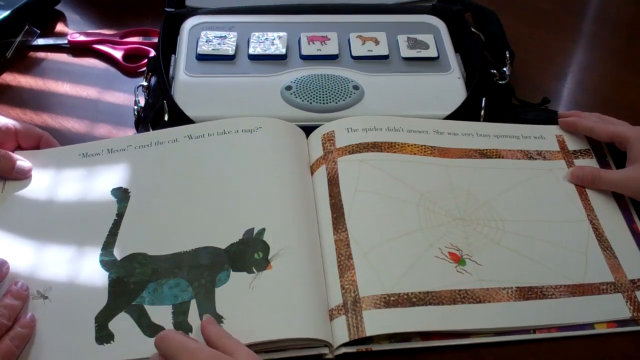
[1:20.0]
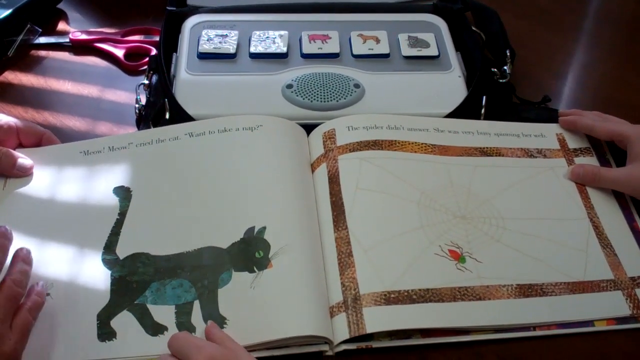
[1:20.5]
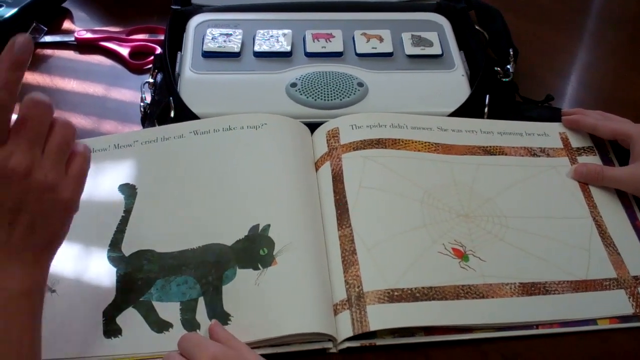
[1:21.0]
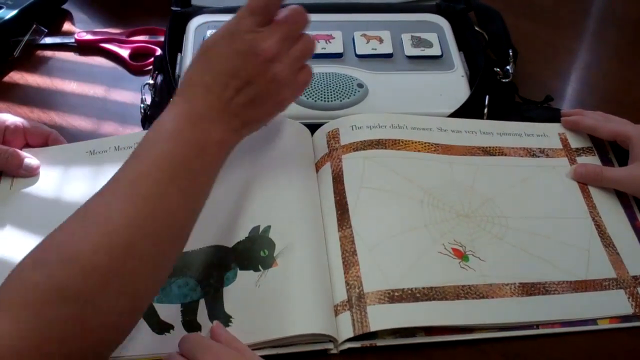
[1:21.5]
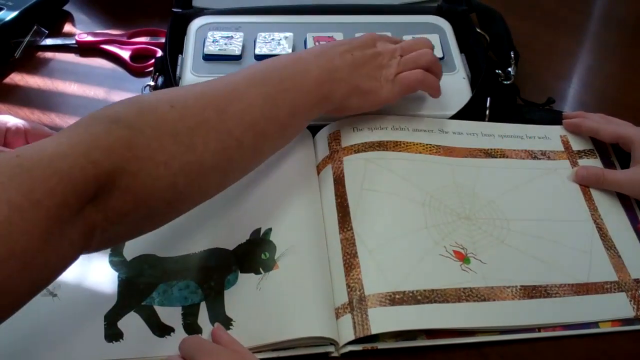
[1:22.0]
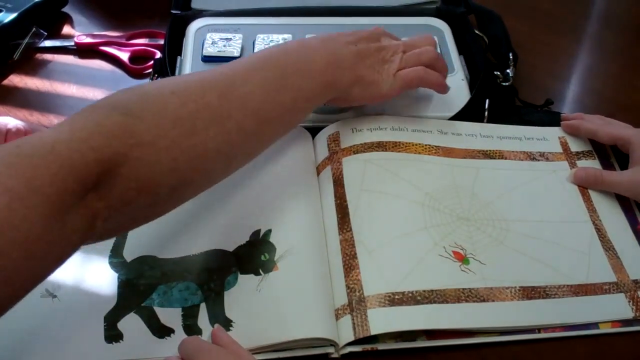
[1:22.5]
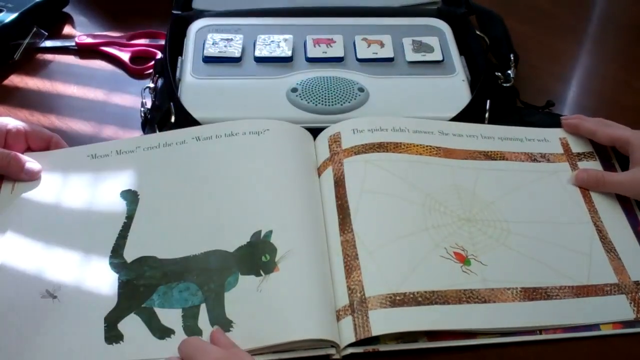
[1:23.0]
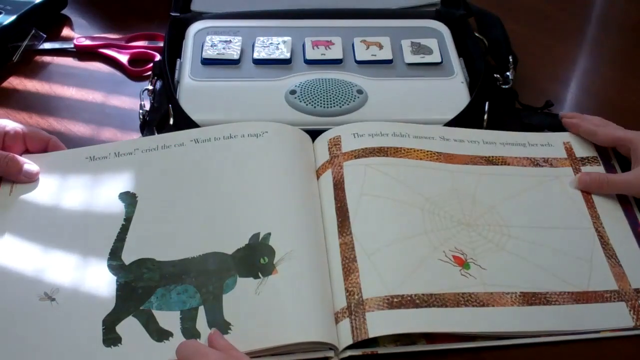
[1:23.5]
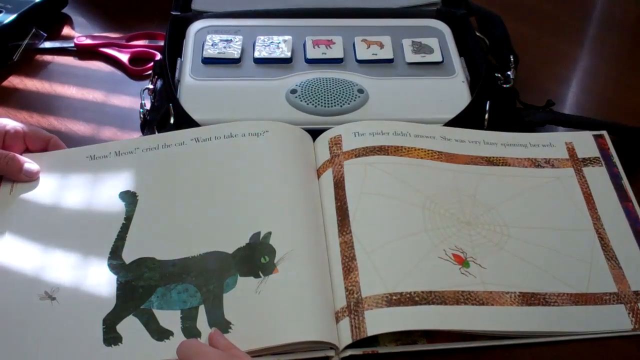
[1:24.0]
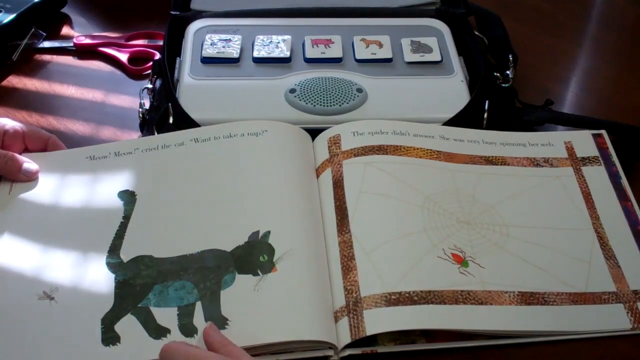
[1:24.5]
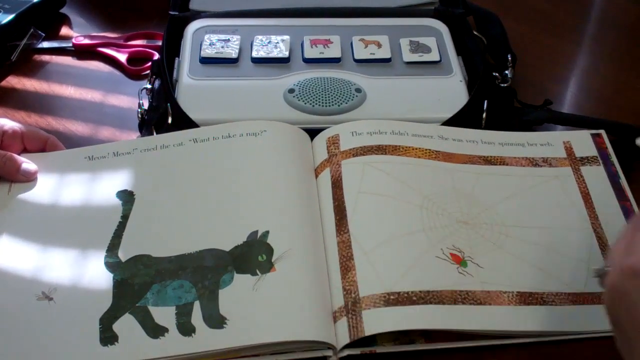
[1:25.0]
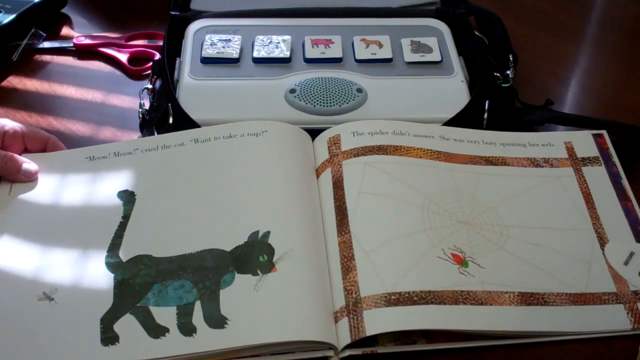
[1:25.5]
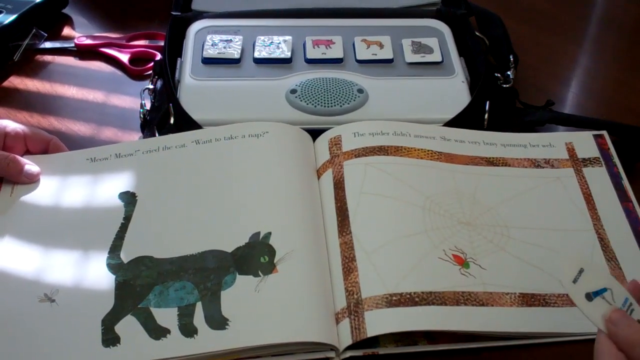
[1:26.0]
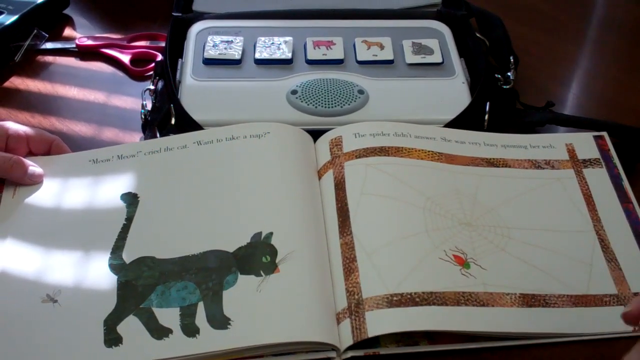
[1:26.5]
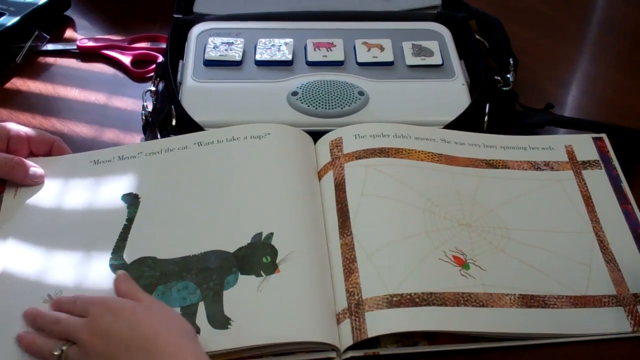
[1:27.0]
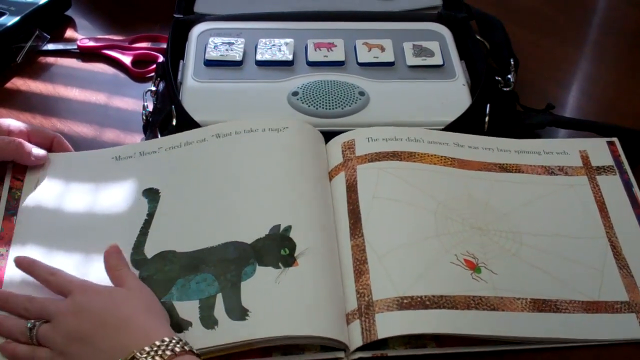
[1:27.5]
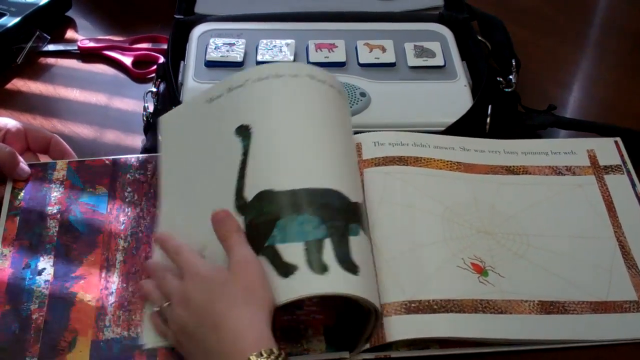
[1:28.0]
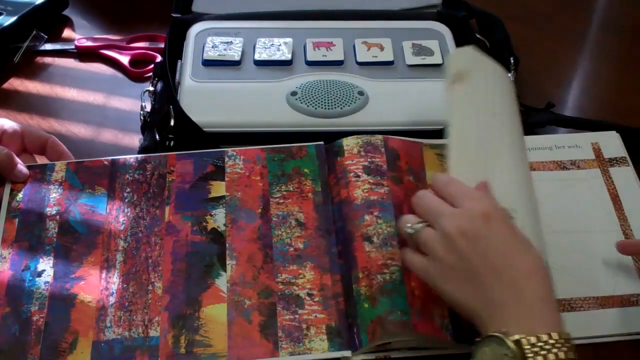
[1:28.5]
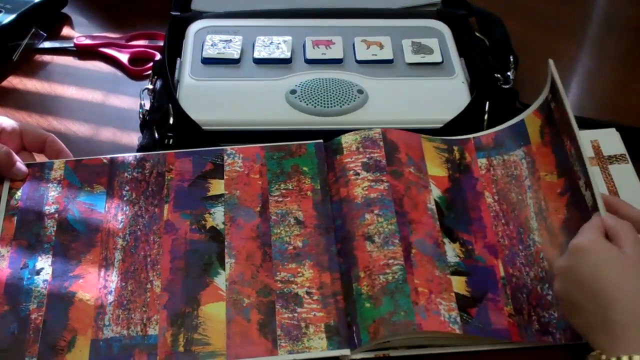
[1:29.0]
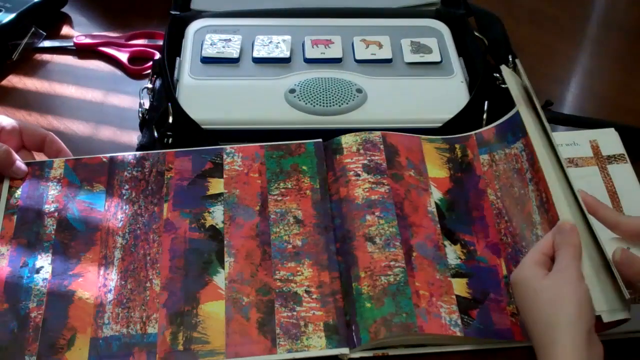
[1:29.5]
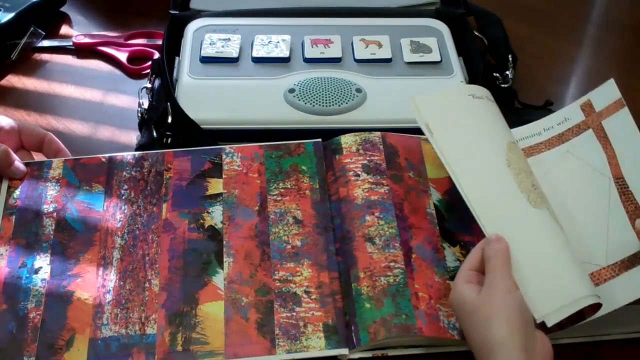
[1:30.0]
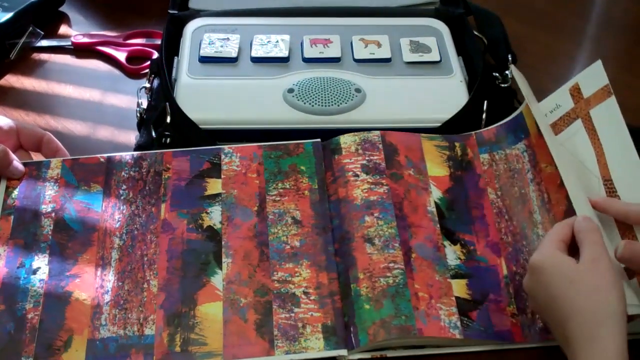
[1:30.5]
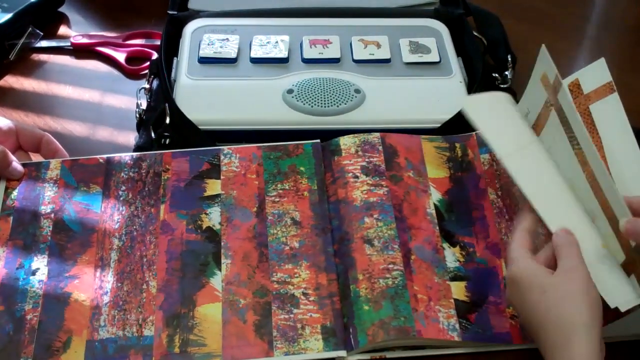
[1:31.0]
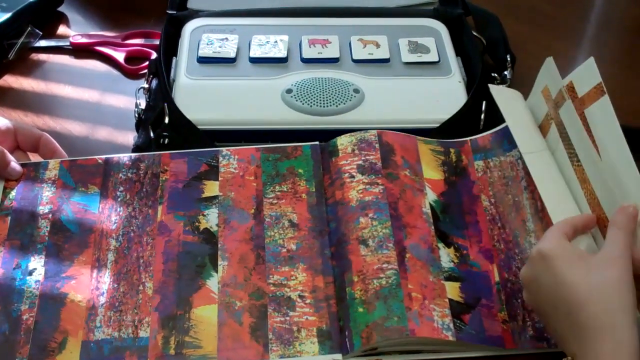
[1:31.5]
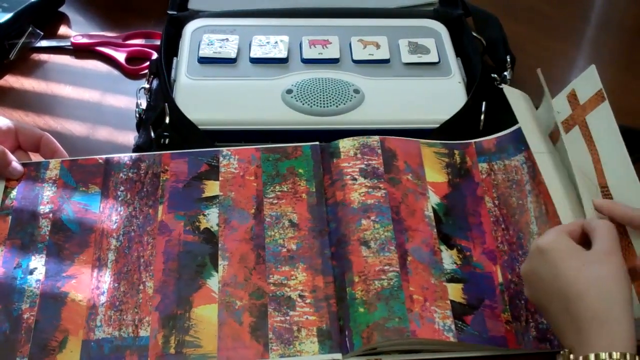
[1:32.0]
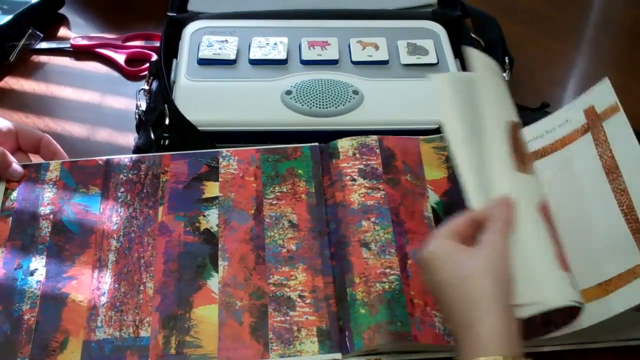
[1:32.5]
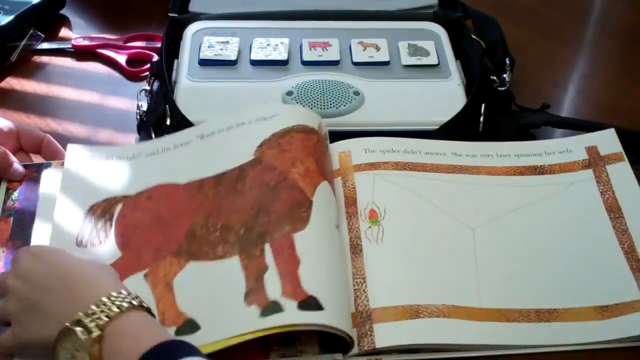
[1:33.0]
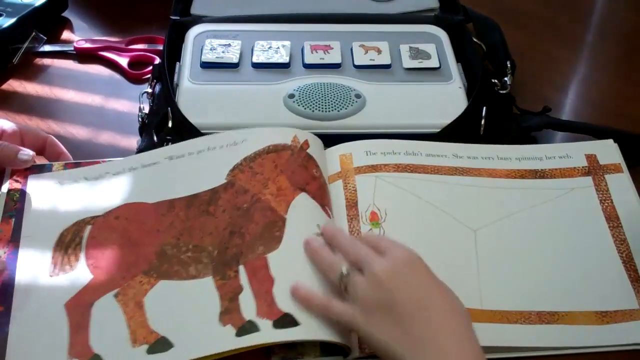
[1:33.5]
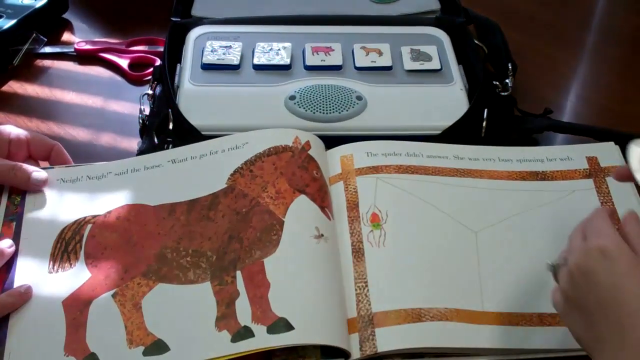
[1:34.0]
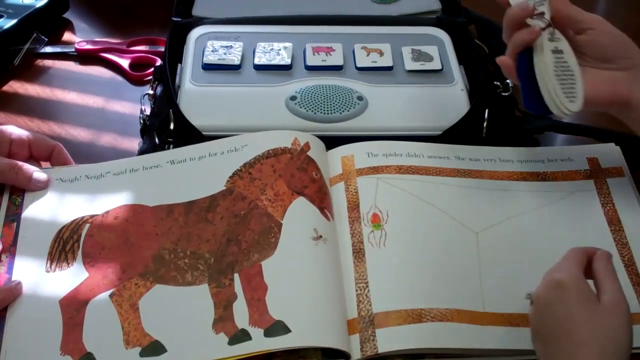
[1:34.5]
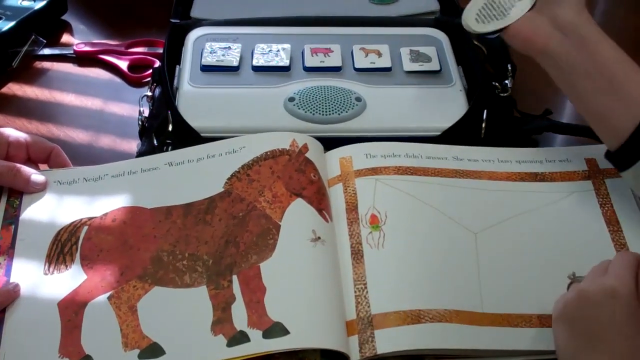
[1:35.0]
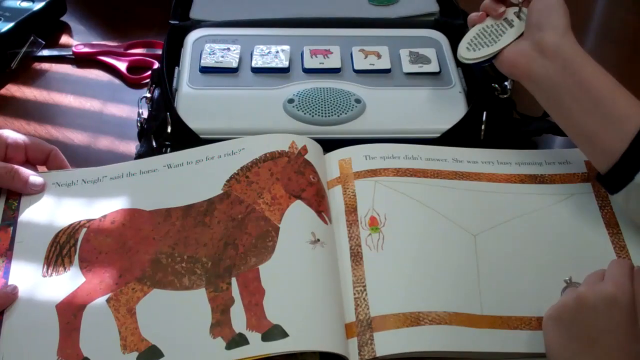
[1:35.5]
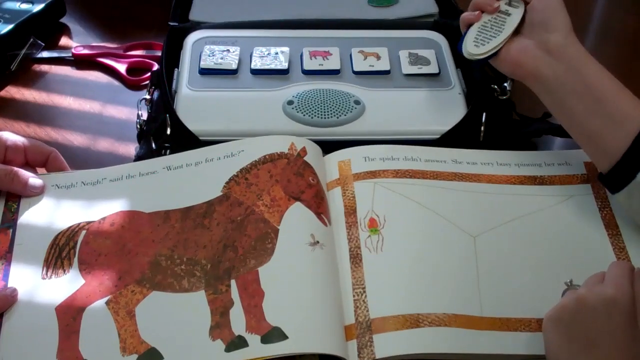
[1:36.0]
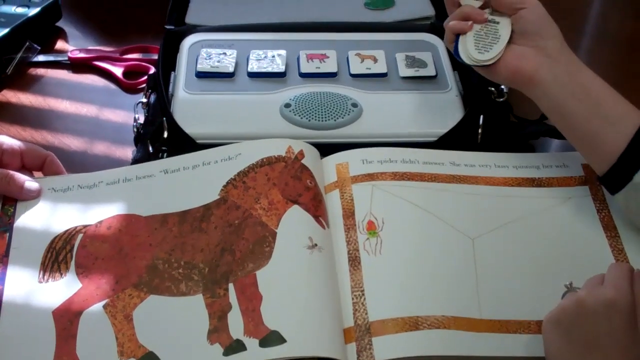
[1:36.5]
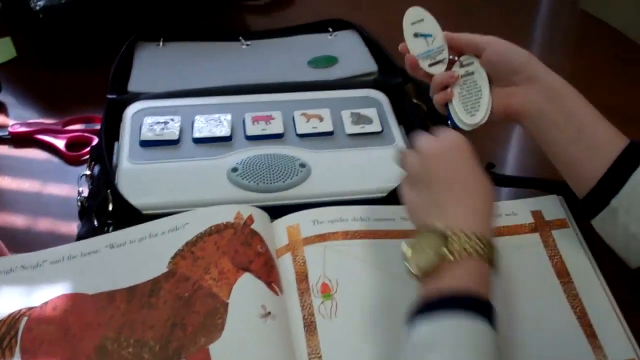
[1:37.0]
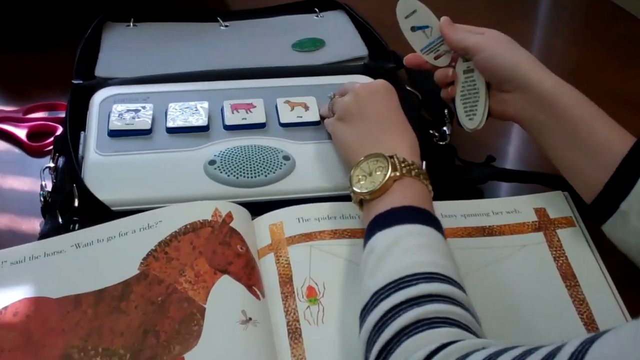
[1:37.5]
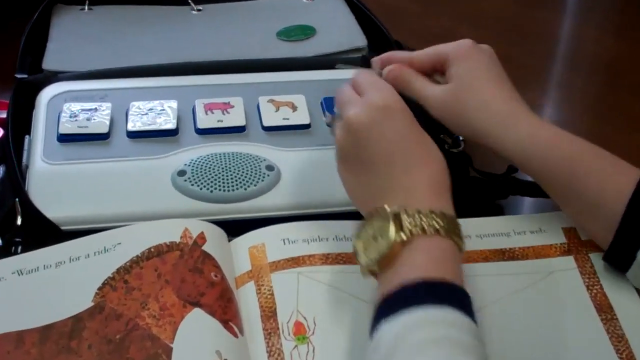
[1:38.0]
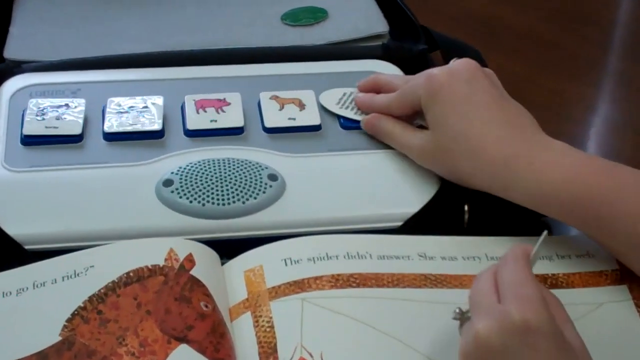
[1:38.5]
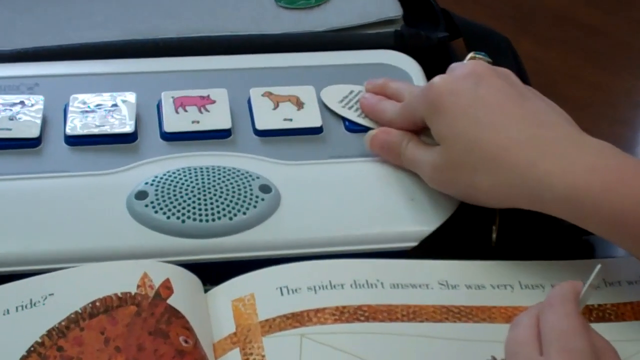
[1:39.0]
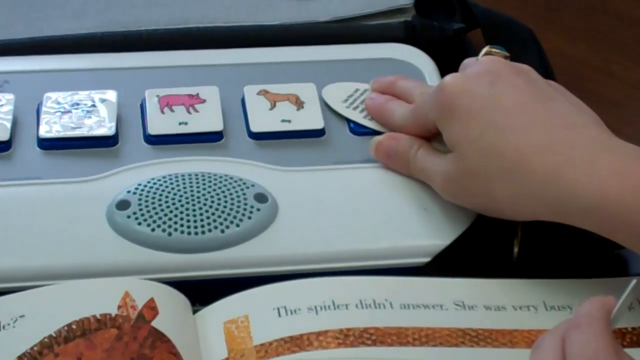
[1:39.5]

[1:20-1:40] The open Eric Carle book shows a gray cat illustration on the left-hand page; the animals are all made in the tissue paper and collage style Eric Carle is known for. The text reads "meow, meow, cried the cat, want to take a nap." The right-hand page shows the square fence post with the spider in the center of the web she has spun, and the text "the spider didn't answer. She was very busy spinning her web." A woman's right hand is on the screen. The arm of a small child reaches across the page and taps a cat button on a console above the book. The woman then opens the book back at the beginning to the horse. She holds up a key card with a microphone icon on it and holds it to the image of the cat on the console.